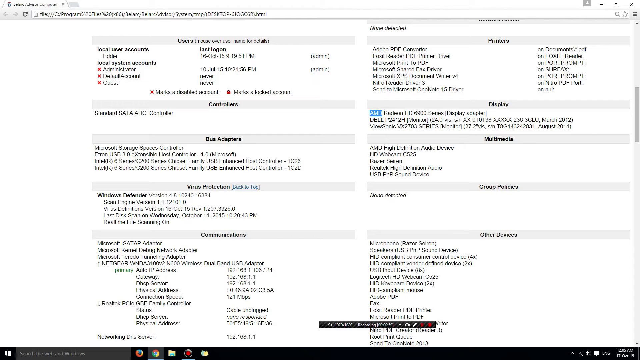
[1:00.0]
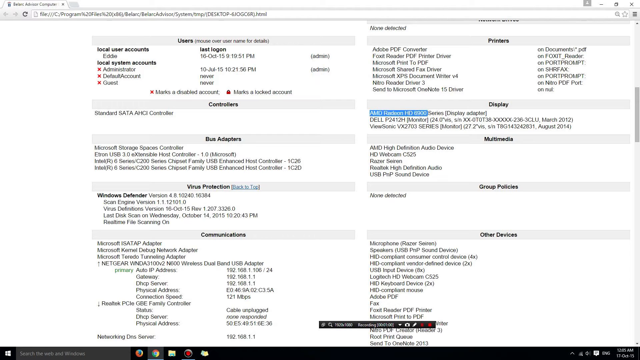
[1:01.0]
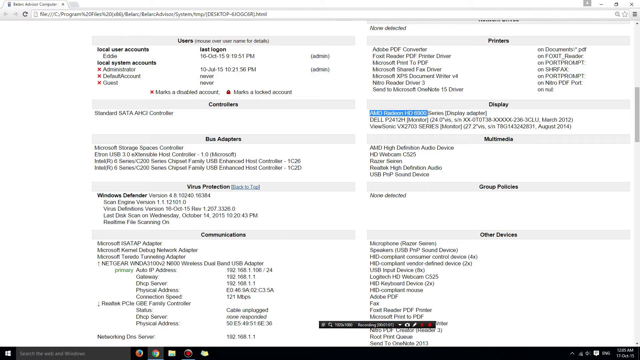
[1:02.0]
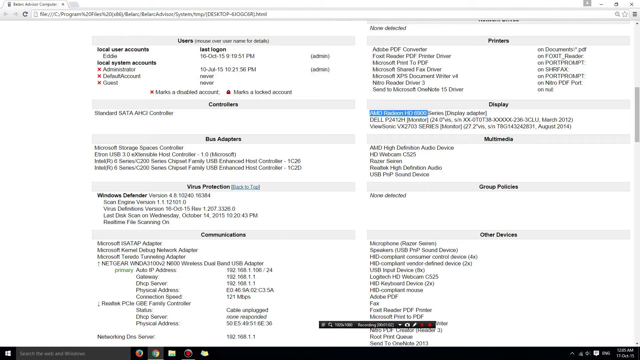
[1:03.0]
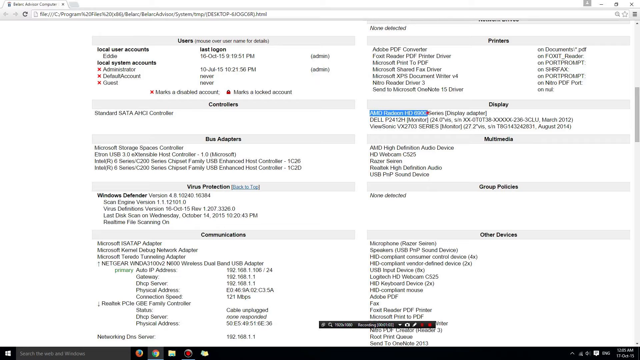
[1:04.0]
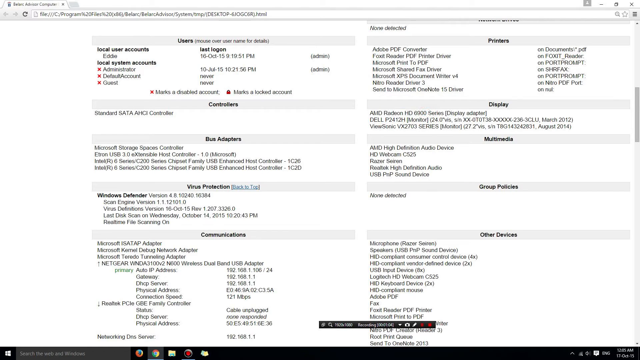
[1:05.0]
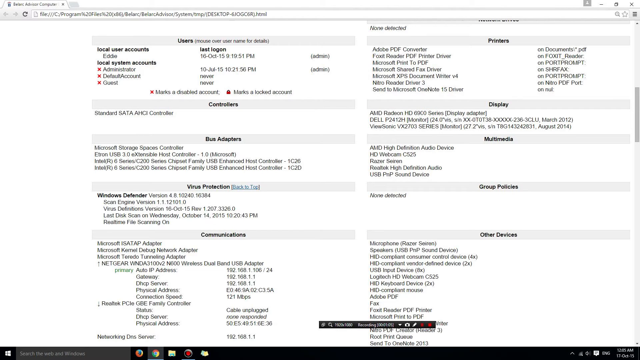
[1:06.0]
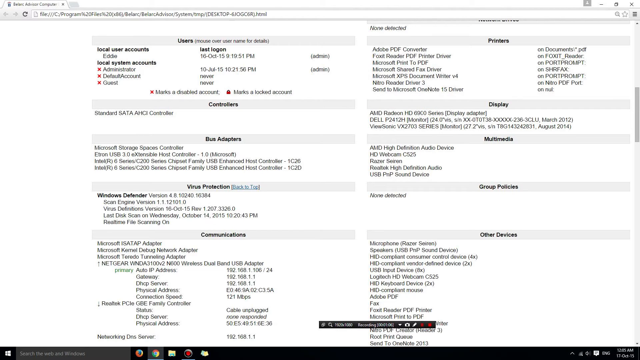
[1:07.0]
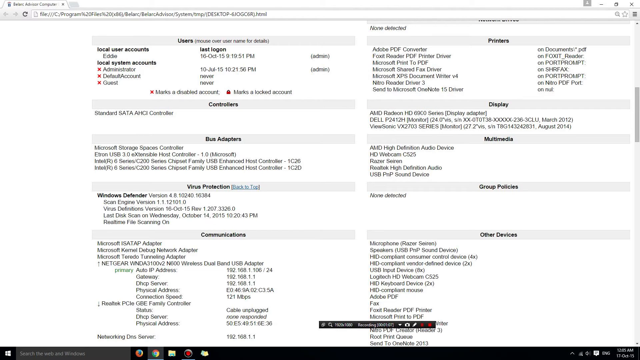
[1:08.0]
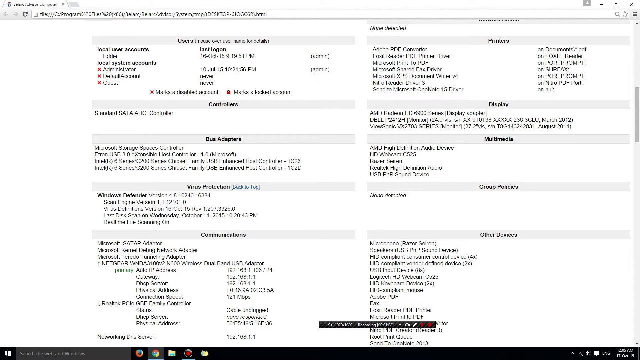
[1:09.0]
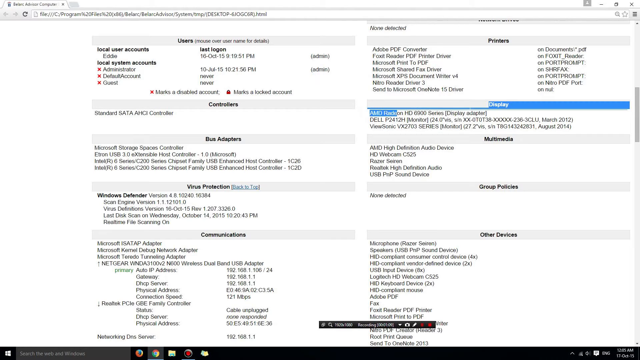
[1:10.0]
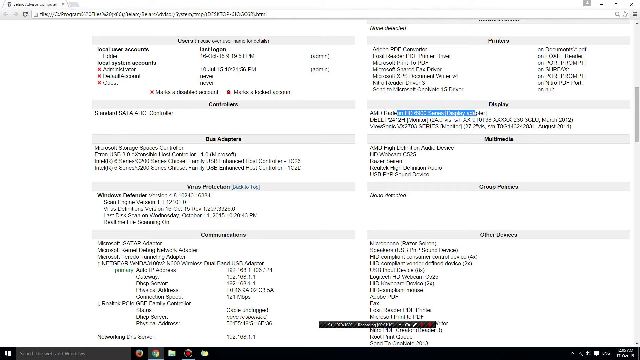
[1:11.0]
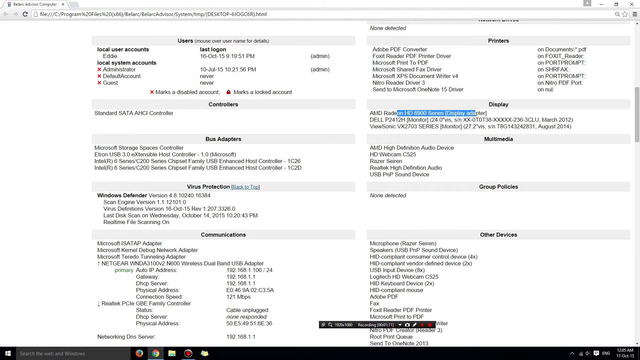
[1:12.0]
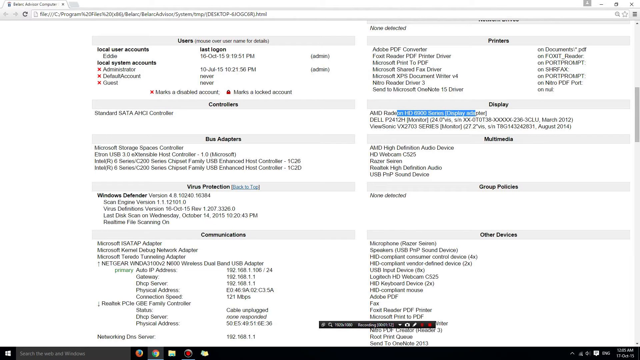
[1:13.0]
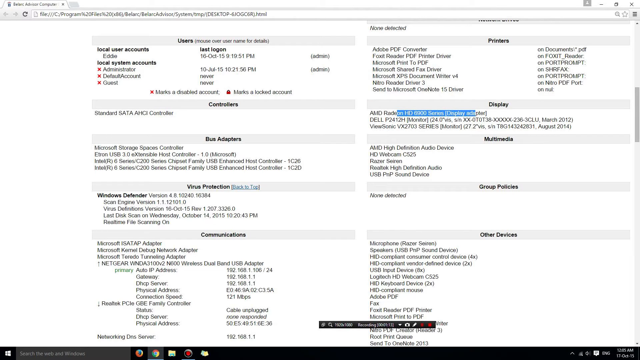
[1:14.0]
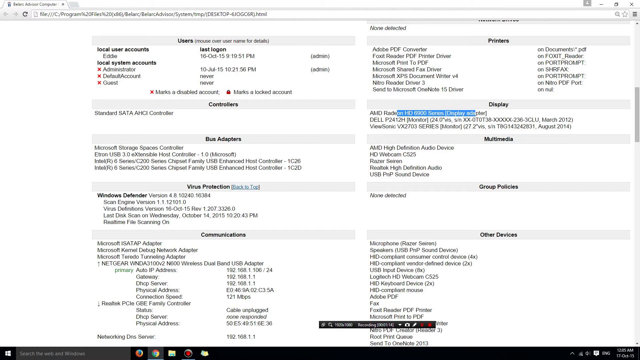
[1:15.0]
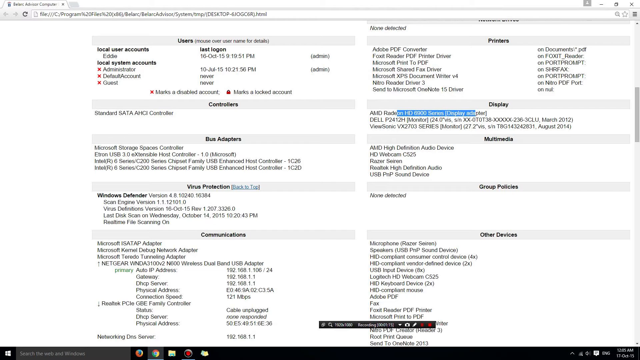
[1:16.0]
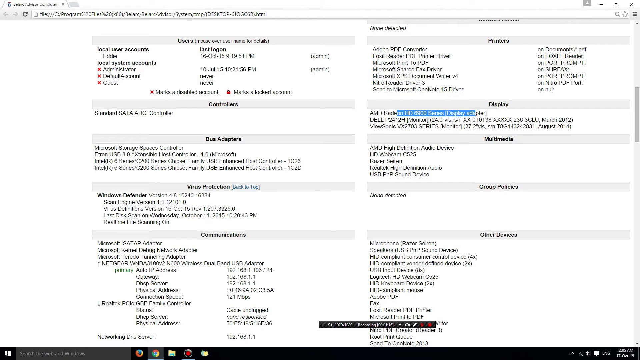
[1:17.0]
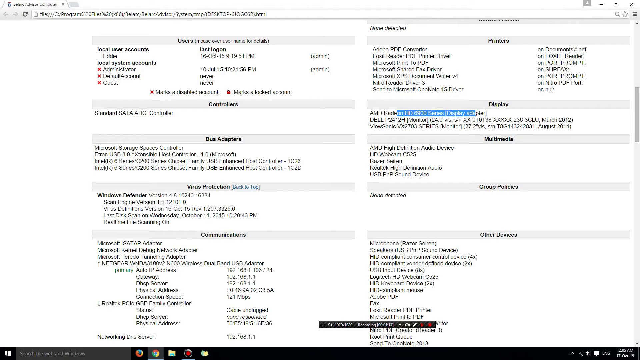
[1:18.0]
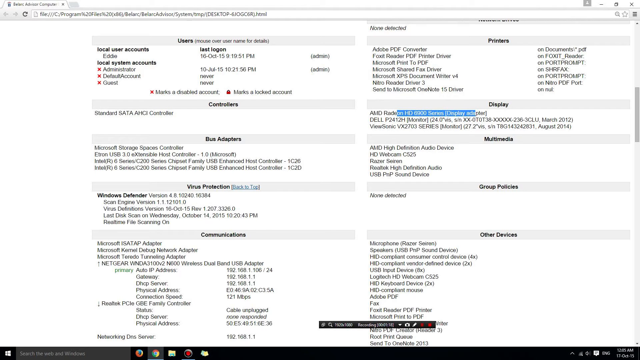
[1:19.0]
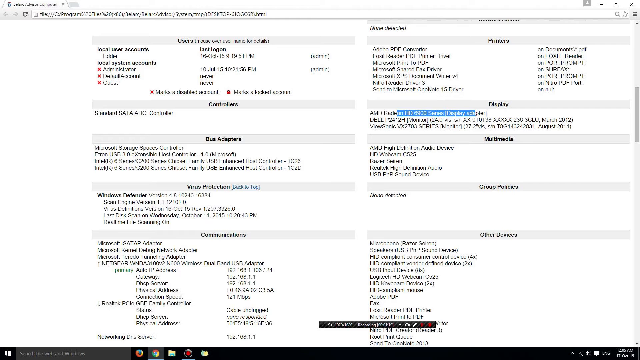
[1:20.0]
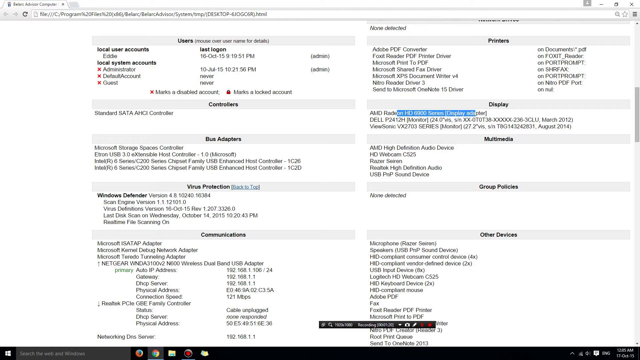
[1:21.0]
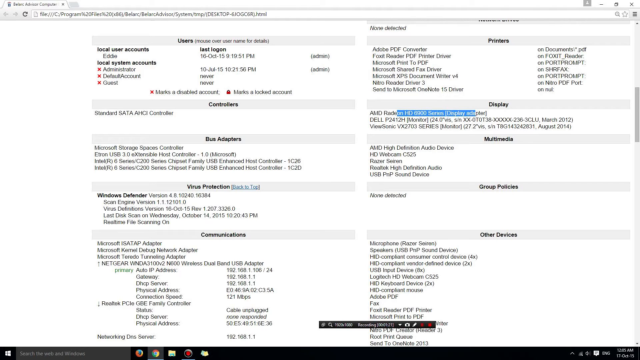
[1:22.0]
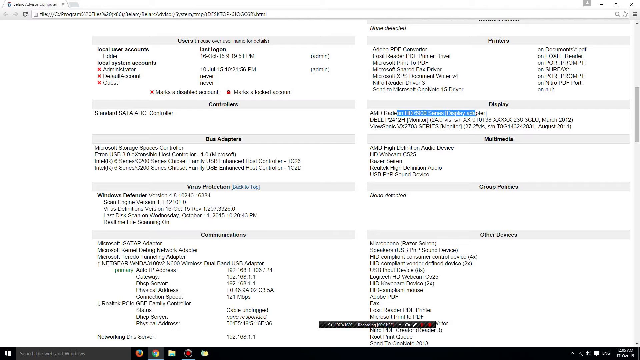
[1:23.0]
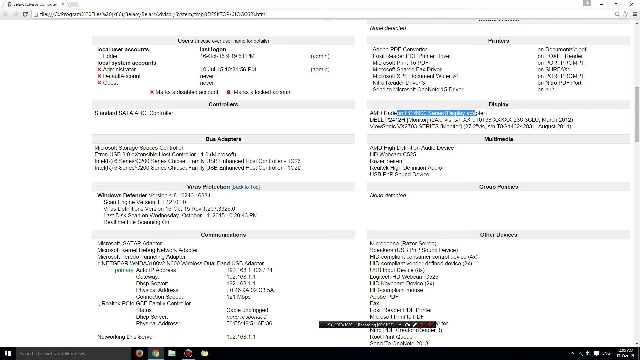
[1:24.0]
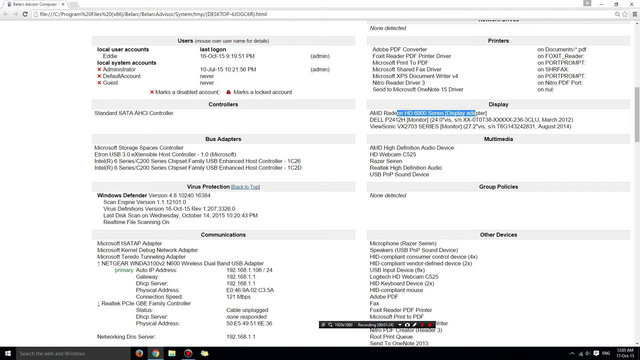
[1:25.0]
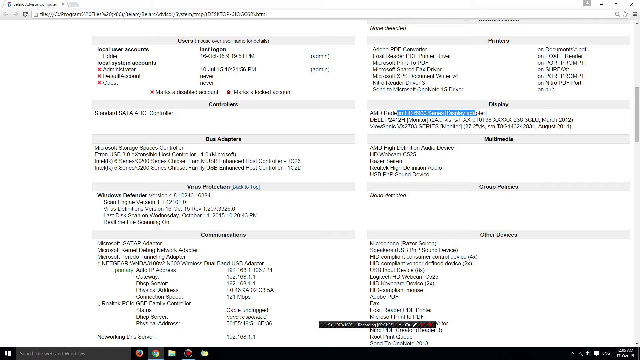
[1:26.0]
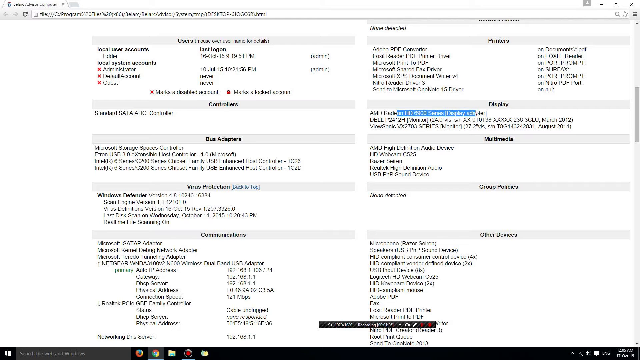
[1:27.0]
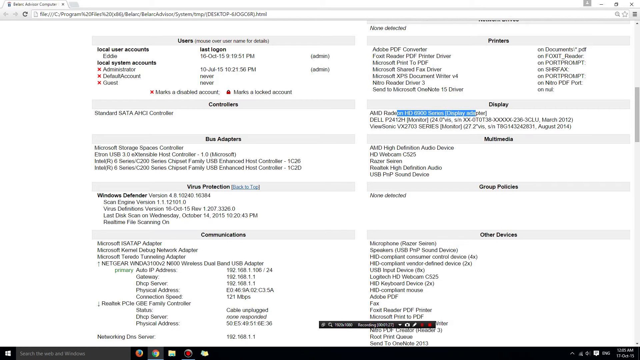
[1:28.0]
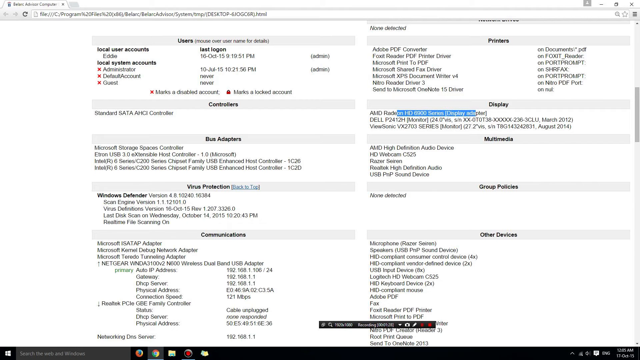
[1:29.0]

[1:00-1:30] The video creator highlights AMD Radeon HD 6000 under the display section of the software, then clicks between the words 6000 and series, marked by a blinking red circle indicating a mouse click. They continue highlighting information on the same line, connected to the display adapter; the blue highlight, made with the mouse and cursor, turns the black text white. The background then changes to a video game showing a vehicle from a rear three-quarter view. The vehicle is an old black or dark-colored sedan with noticeable damage. It is stopped on the left-hand side of the road beside a curb, with a large concrete fence or barrier on its left, and clouds, mountains and trees visible in the distance.